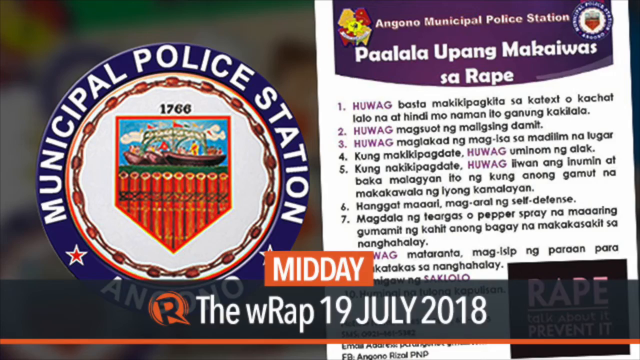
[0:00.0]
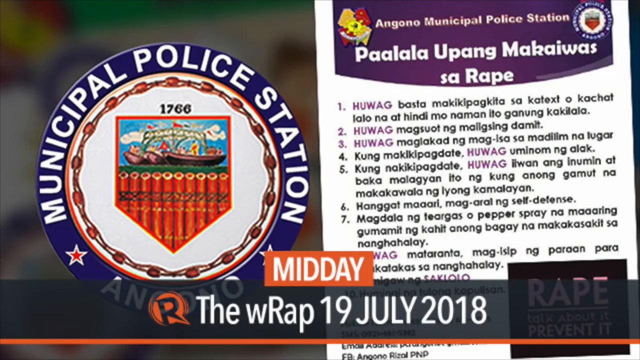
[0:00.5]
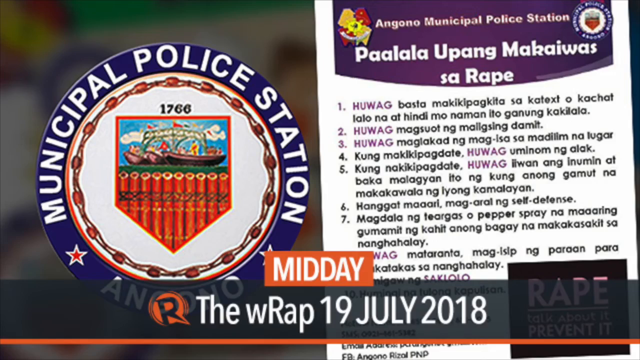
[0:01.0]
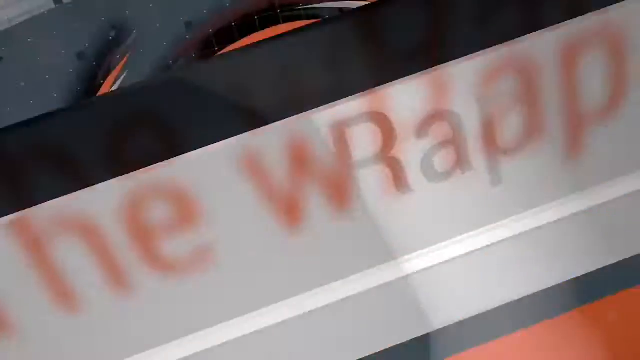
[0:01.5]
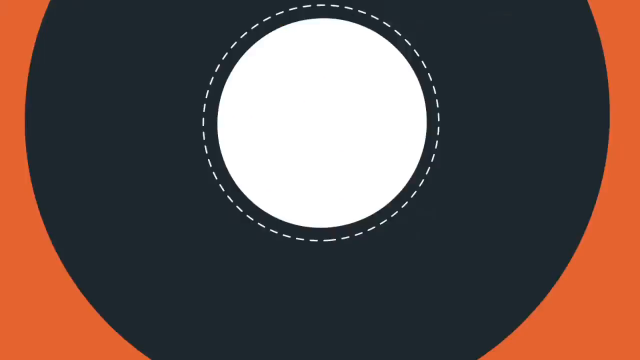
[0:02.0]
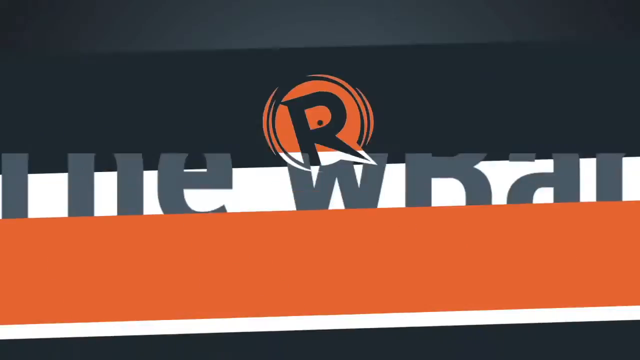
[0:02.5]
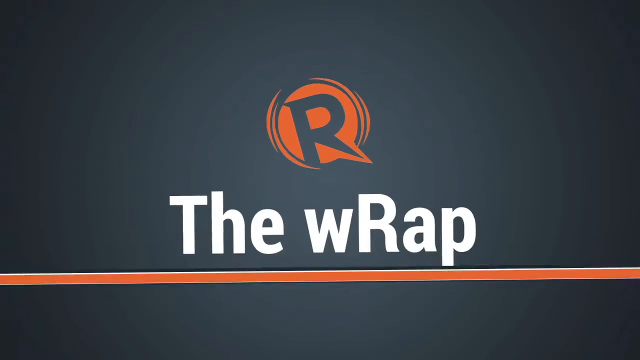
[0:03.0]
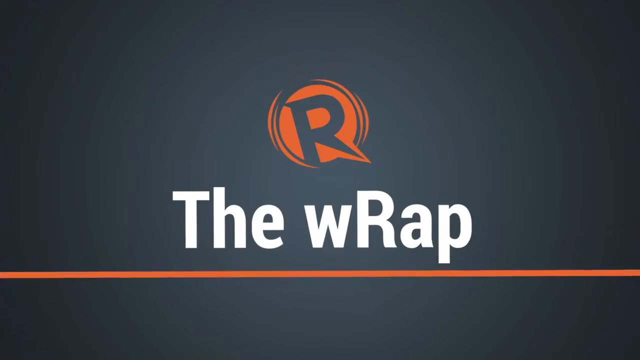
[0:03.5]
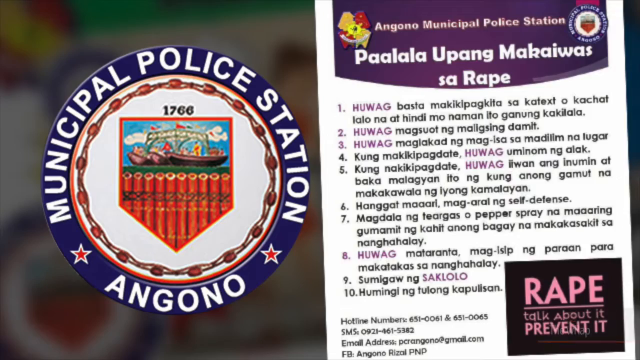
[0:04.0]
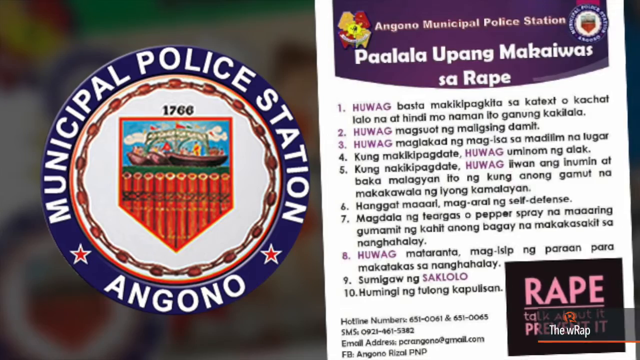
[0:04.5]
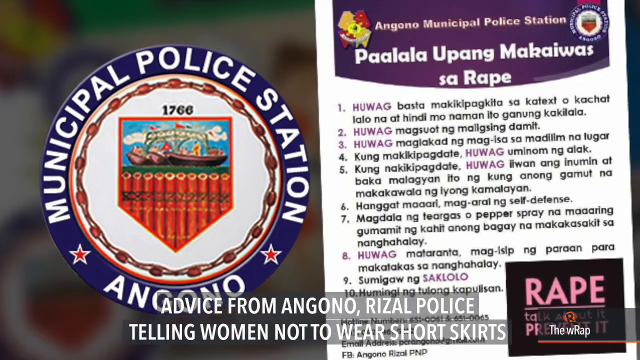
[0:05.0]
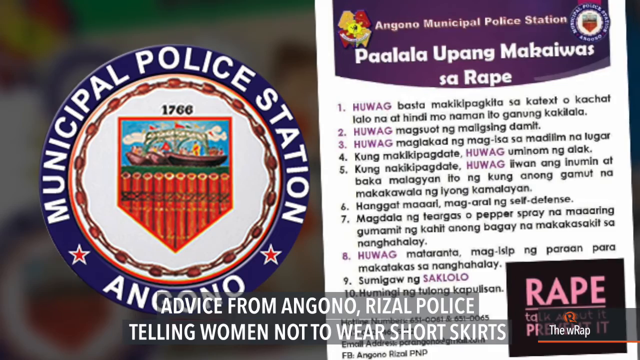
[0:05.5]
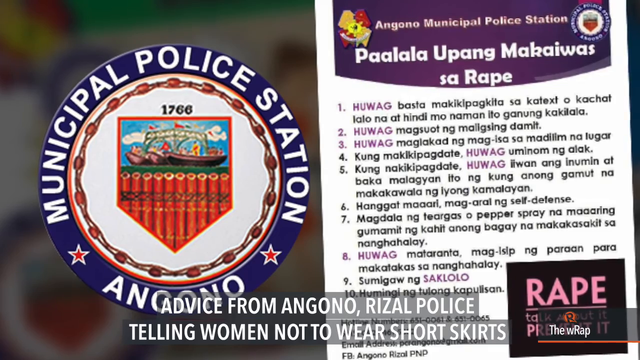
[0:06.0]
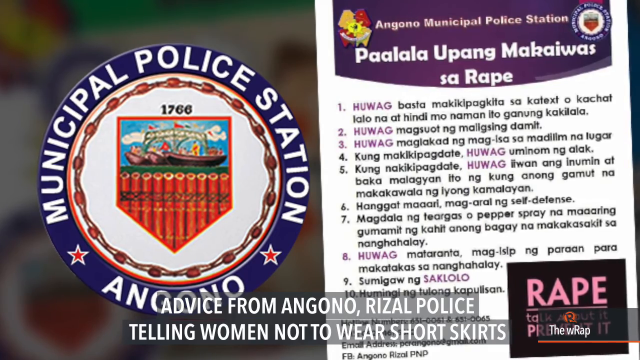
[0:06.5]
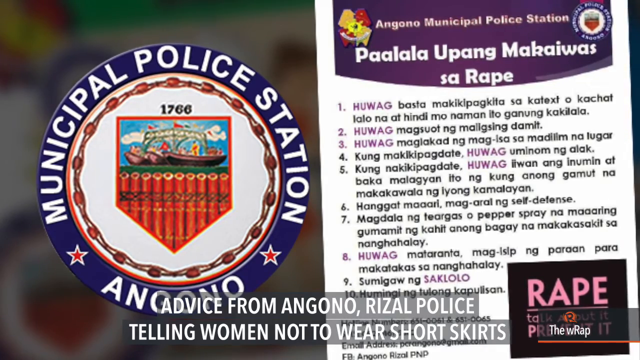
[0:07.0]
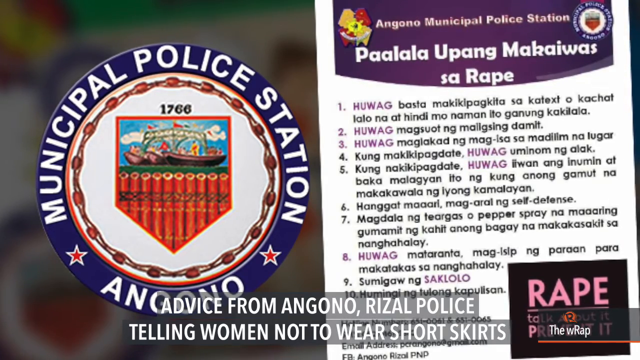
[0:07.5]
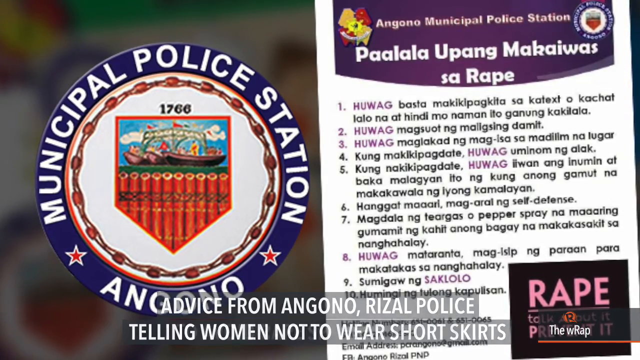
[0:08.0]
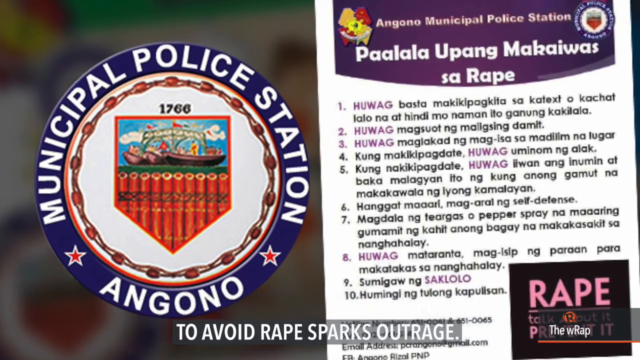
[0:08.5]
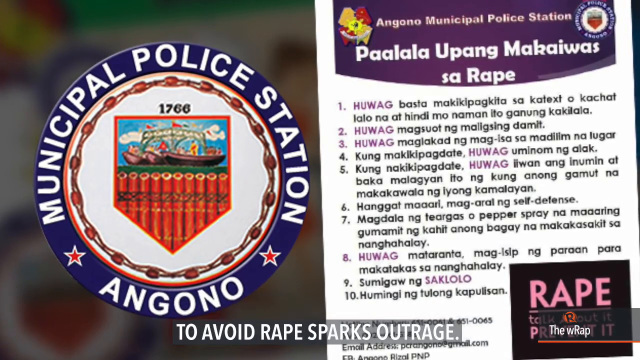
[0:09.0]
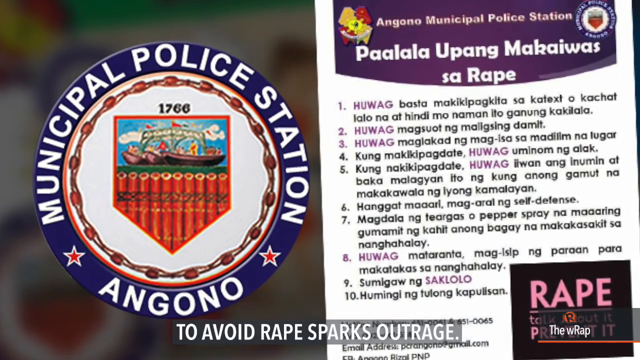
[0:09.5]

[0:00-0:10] A news update from Derwack appears, with a caption reading "Derwack 19 july 2018". Another caption reading "rape" is on the bottom right of the screen. Text on the left-hand side of the screen appears to be in Chinese, while the right-hand side uses the colors white, purple and black. Footage then shows a Chinese maid and a police officer.